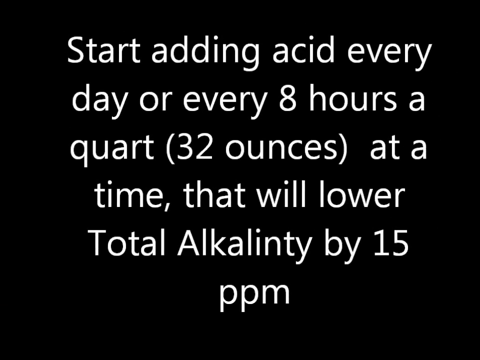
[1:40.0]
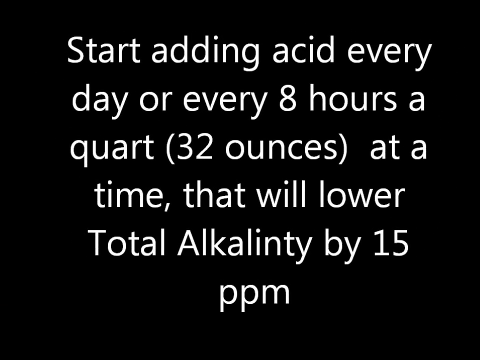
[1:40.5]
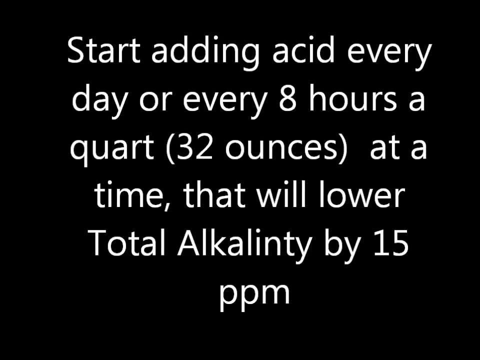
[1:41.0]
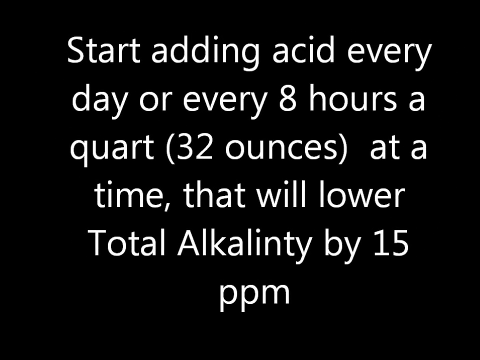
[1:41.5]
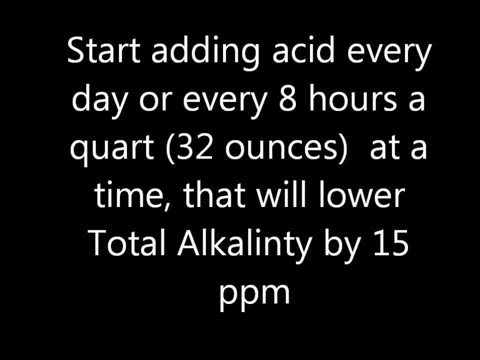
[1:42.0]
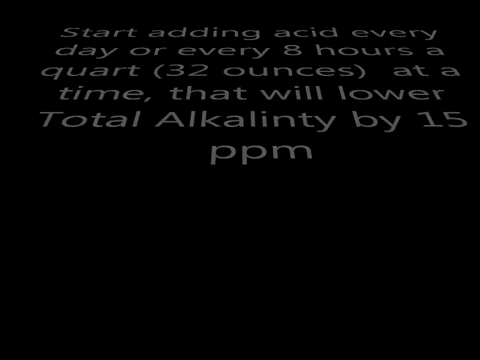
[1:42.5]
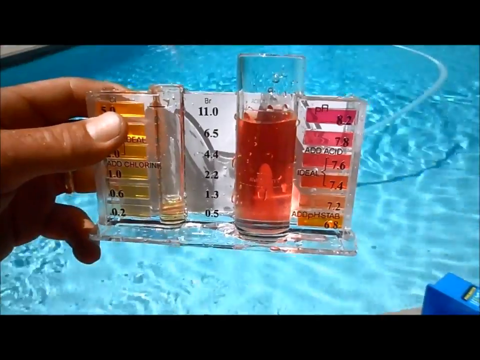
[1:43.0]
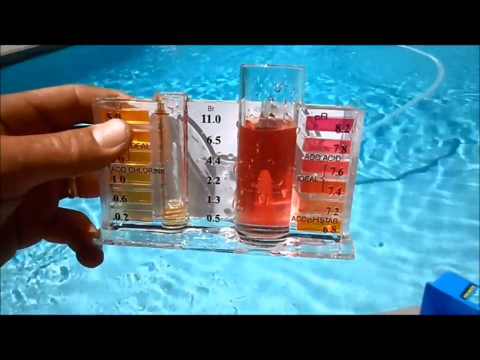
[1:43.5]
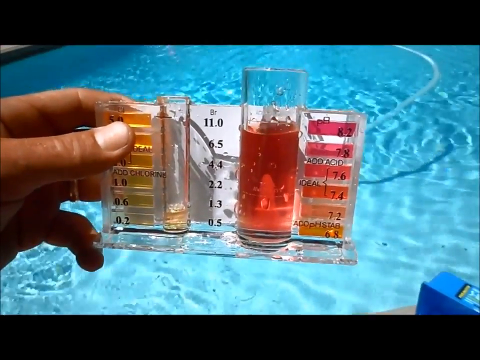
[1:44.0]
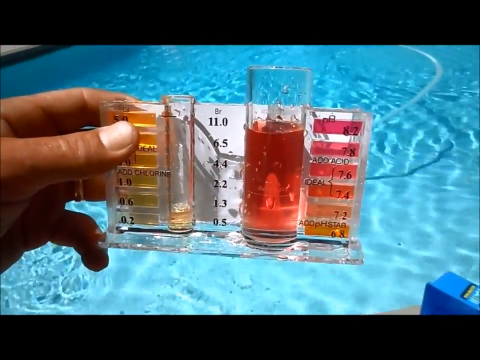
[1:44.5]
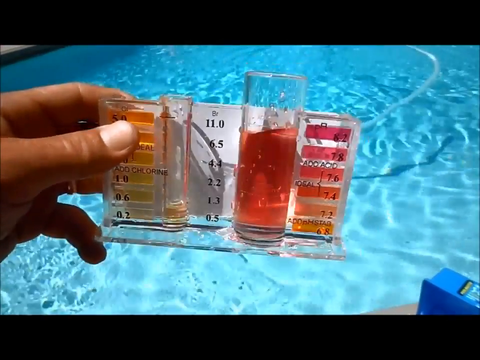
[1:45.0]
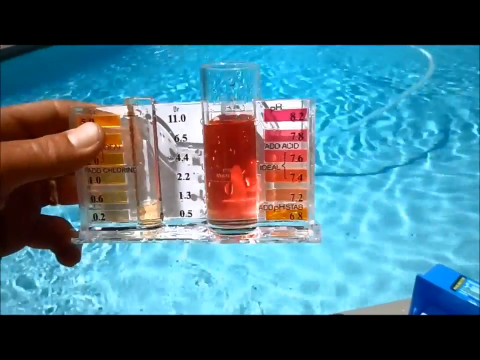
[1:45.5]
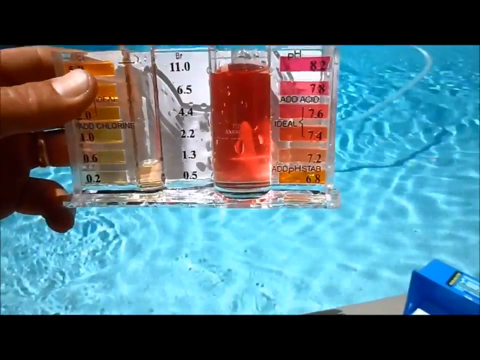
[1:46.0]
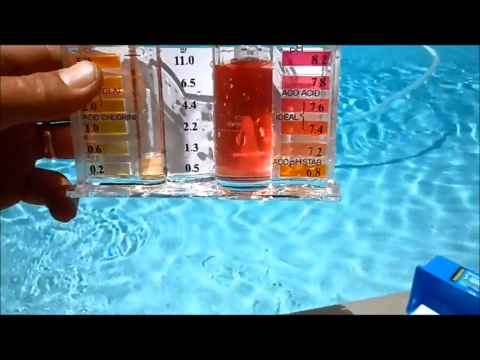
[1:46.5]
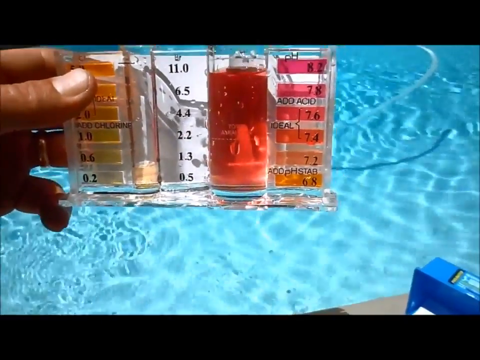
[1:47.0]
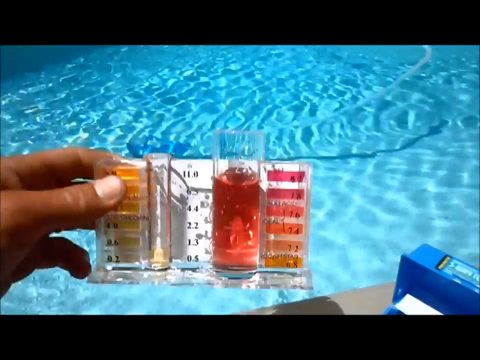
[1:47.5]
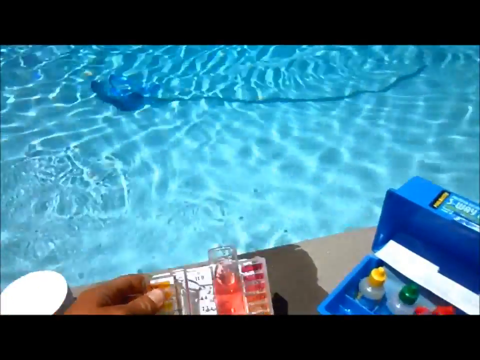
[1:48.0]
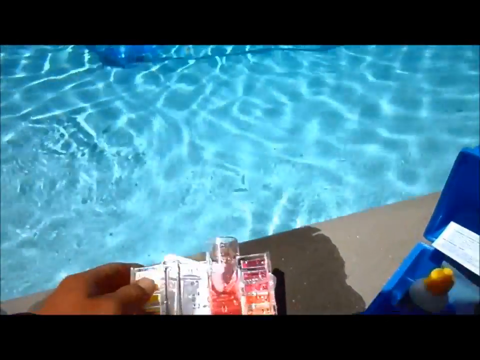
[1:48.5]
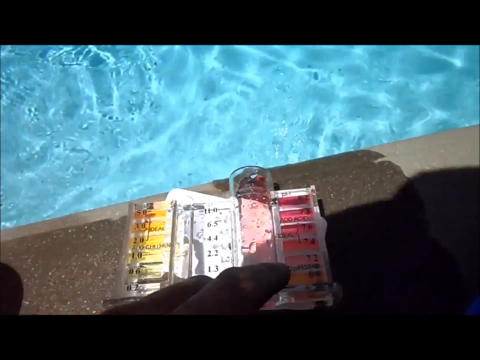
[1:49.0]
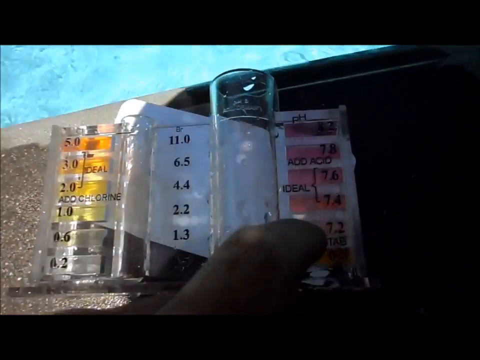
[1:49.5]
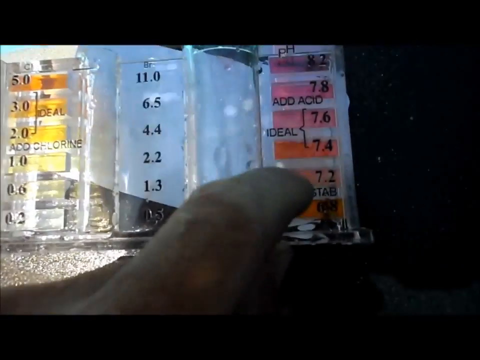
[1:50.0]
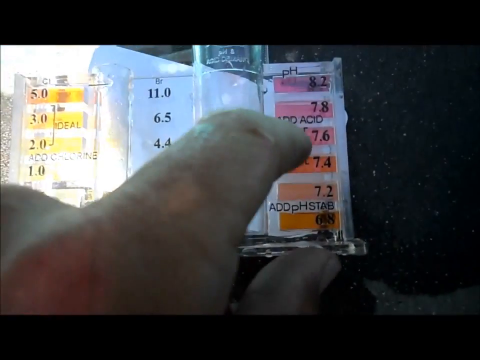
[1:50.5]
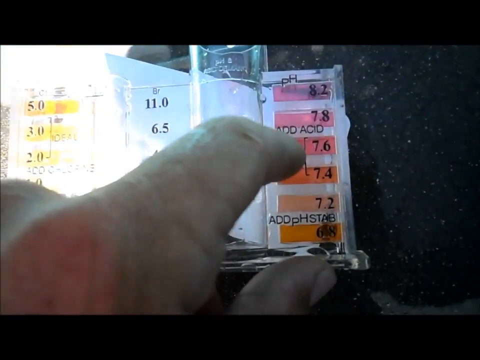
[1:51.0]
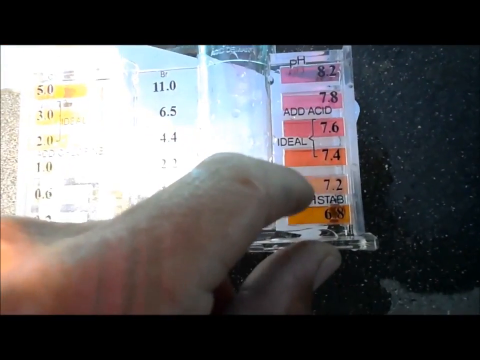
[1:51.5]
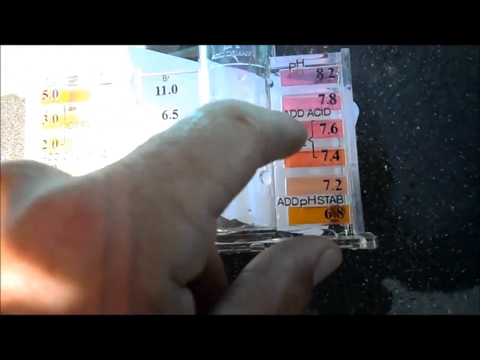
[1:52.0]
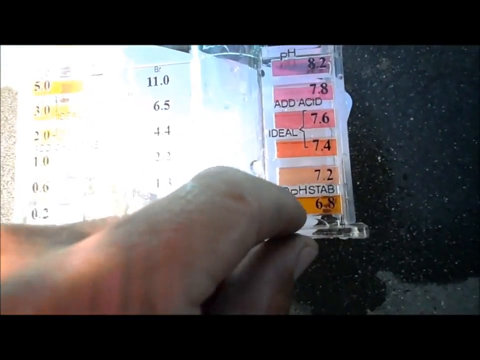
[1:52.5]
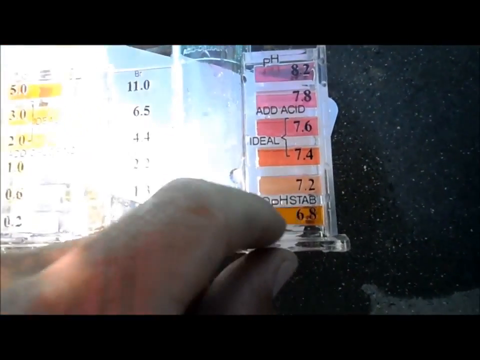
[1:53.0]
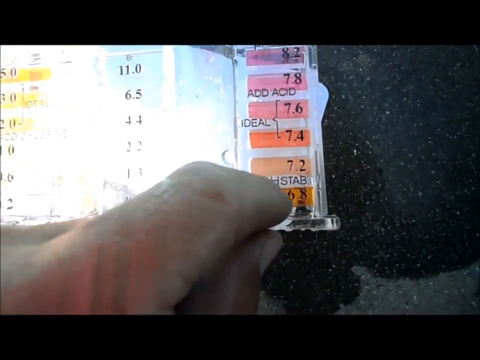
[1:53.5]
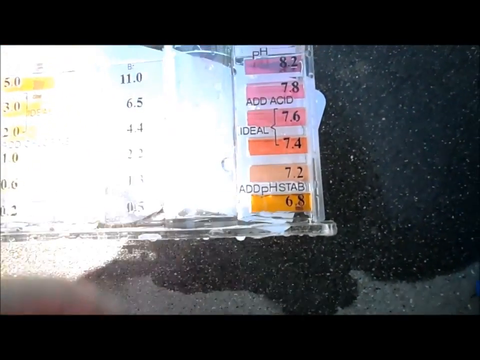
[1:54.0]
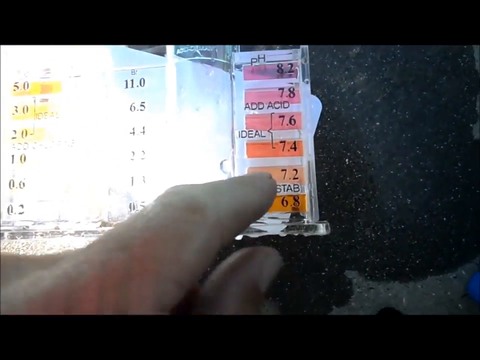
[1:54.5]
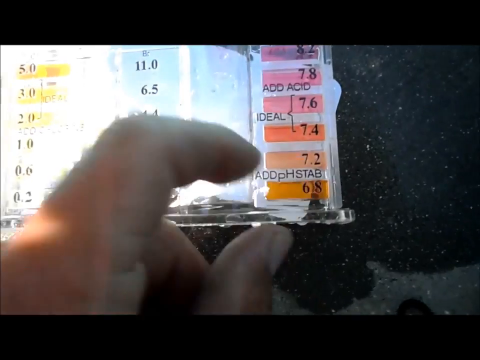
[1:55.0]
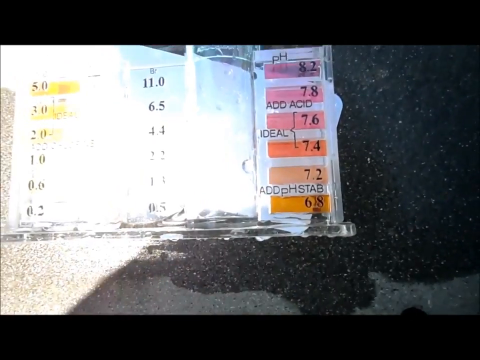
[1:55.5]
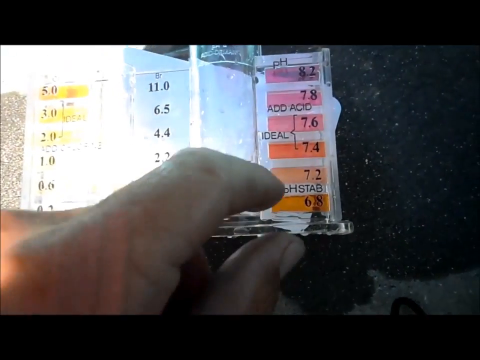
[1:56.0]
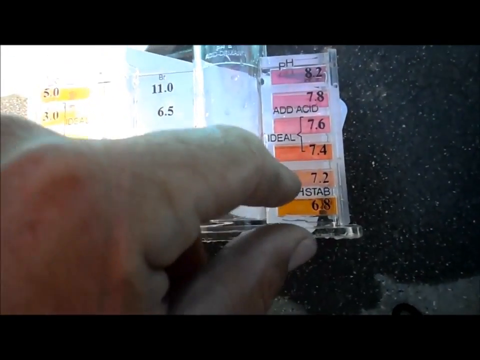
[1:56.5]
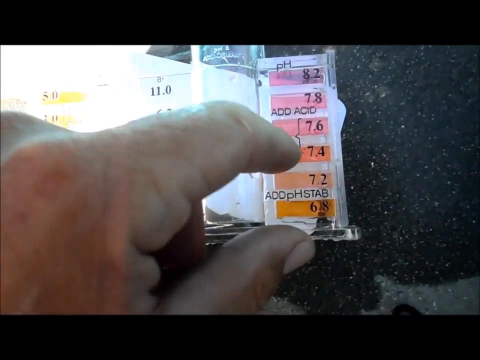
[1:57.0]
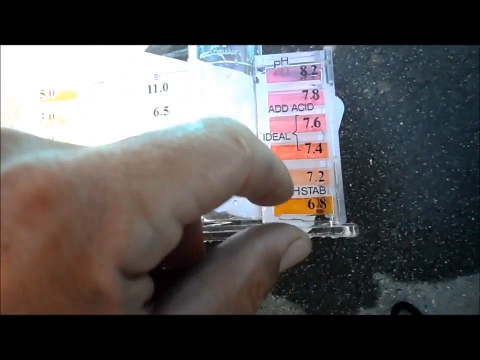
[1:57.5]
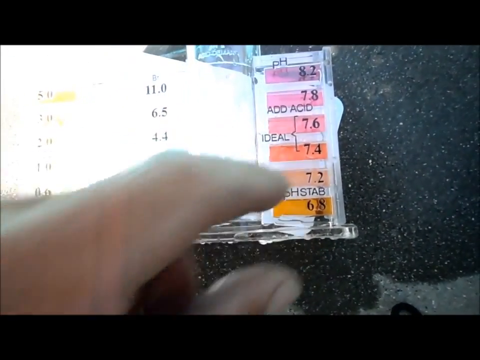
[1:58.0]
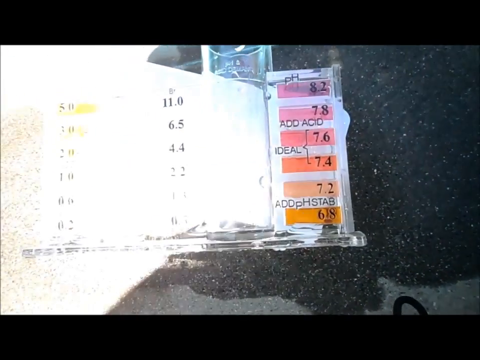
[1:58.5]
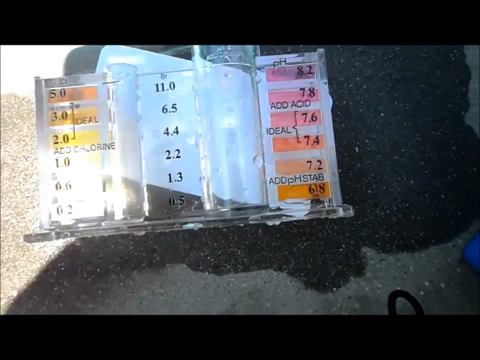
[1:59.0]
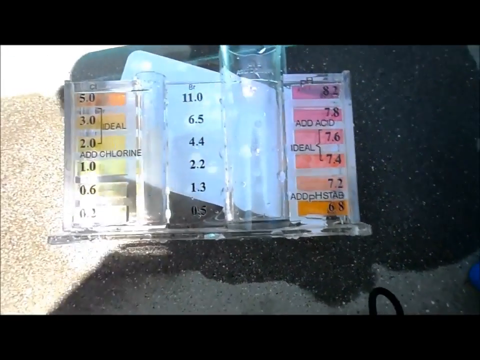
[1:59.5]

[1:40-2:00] A black screen with white writing gives instructions on what to do with the testing substances, including how to add the acid and at what times. The video returns to the man, who holds the test kit in his left hand, holds it up to the camera, and sets it down on its side on the concrete. The camera pans in very close to the kit, and its markings are clearly readable. When he lays it down, the liquid in the test tube pours out, apparently into the pool. He points to the numbers on the right-hand side, which run from 8.2 down to 6.8, with "pH", "add acid" and "ideal" marking where the best numbers for the pool are. His shadow falls over the test kit.